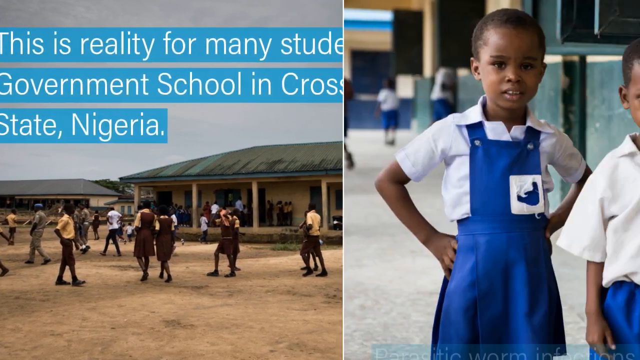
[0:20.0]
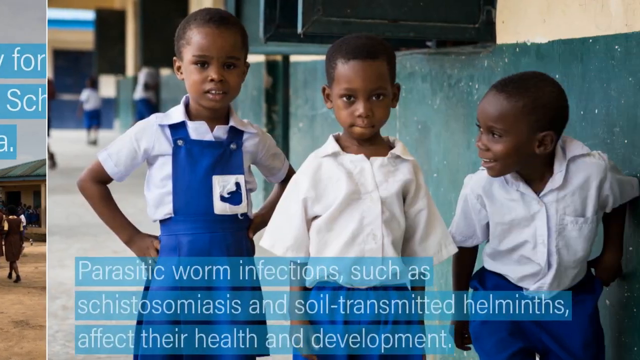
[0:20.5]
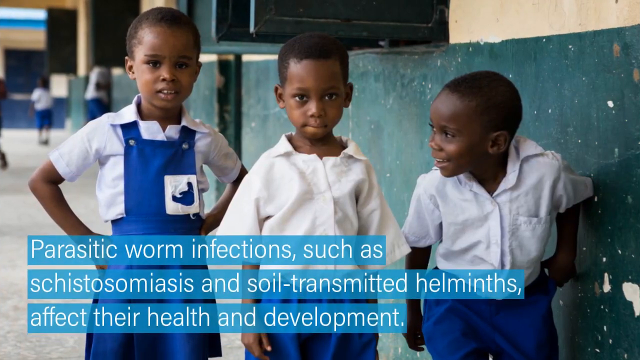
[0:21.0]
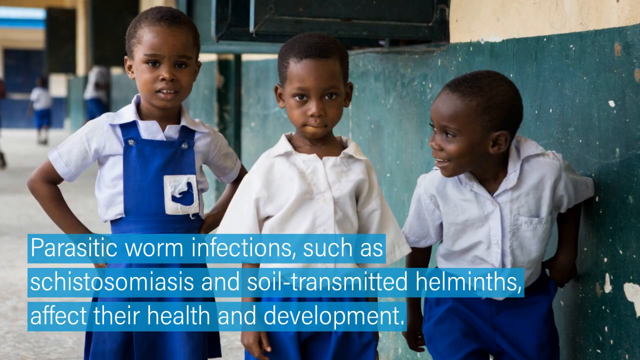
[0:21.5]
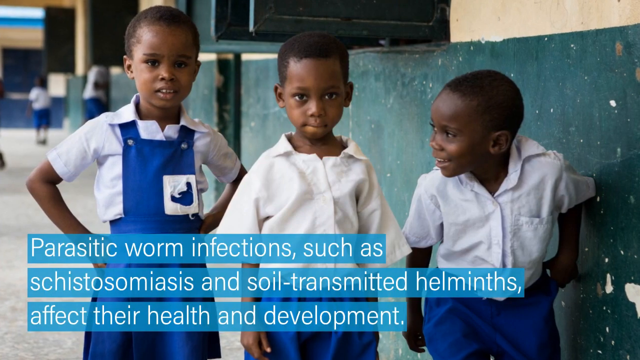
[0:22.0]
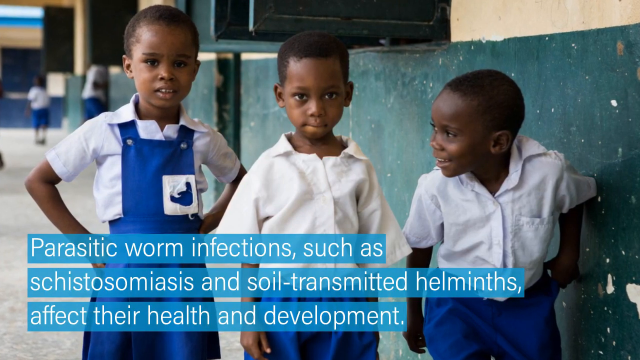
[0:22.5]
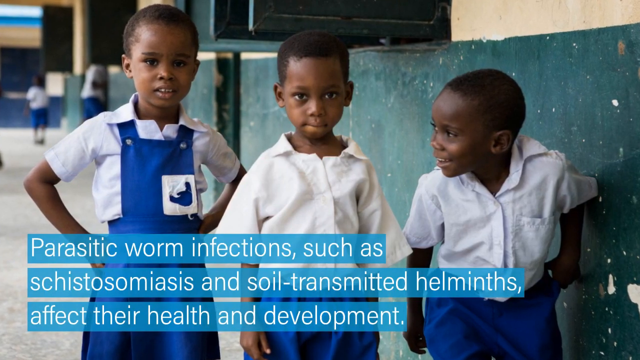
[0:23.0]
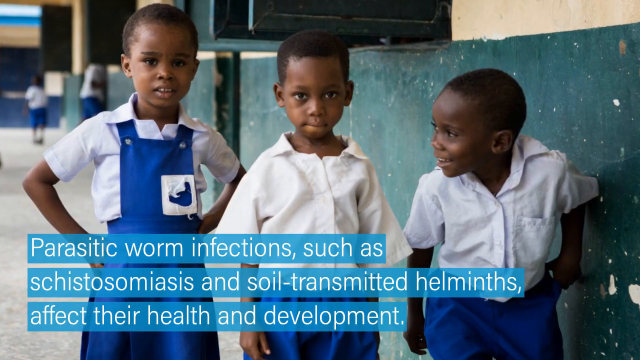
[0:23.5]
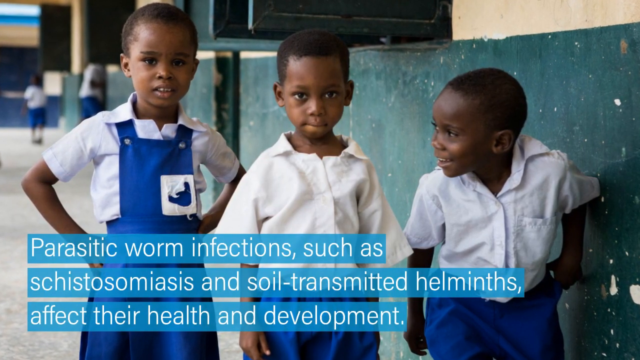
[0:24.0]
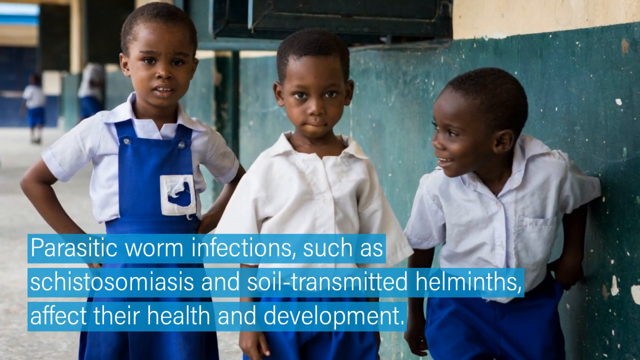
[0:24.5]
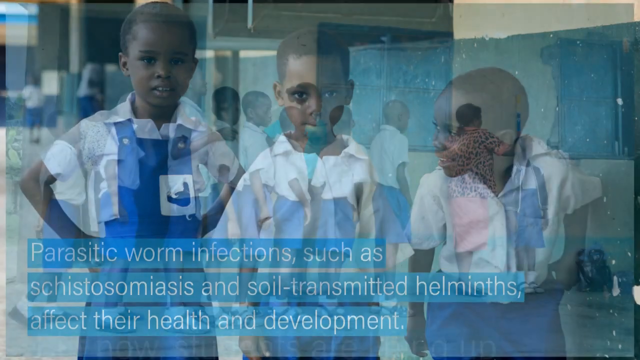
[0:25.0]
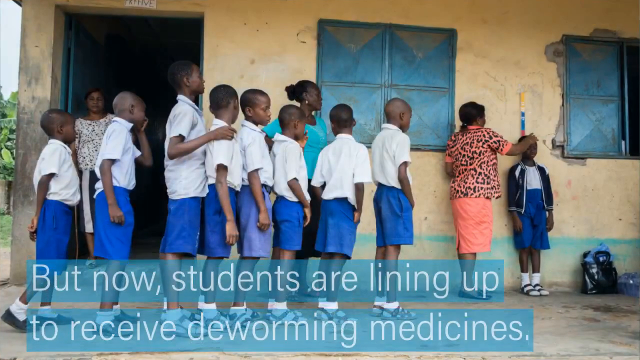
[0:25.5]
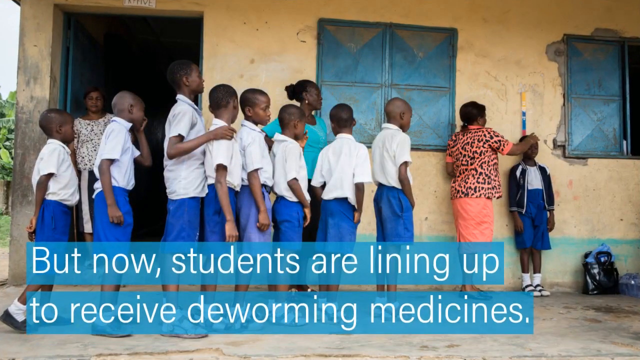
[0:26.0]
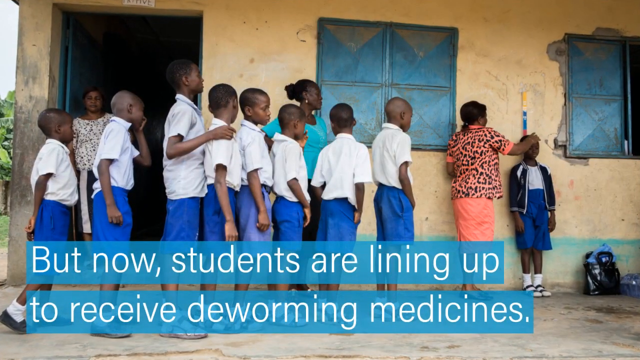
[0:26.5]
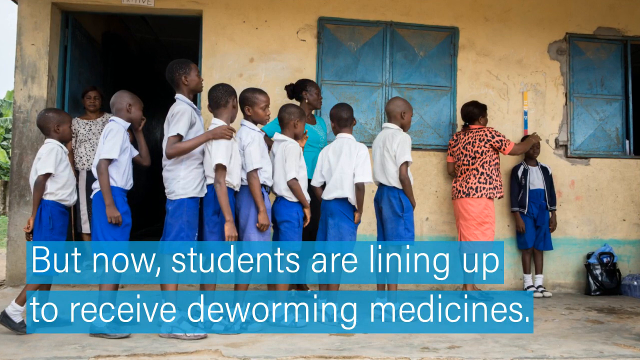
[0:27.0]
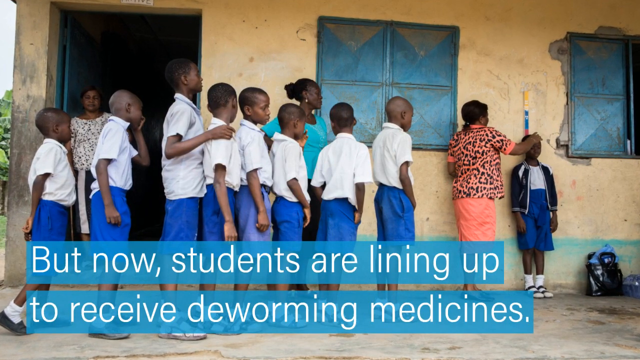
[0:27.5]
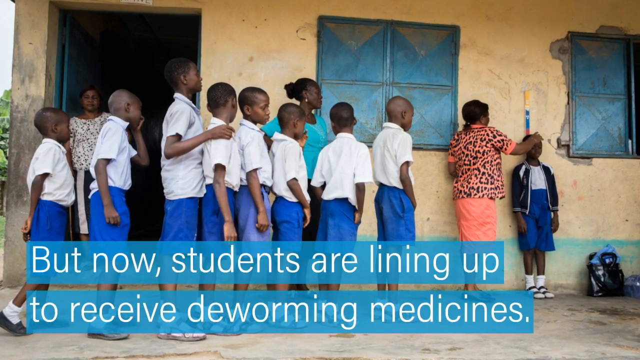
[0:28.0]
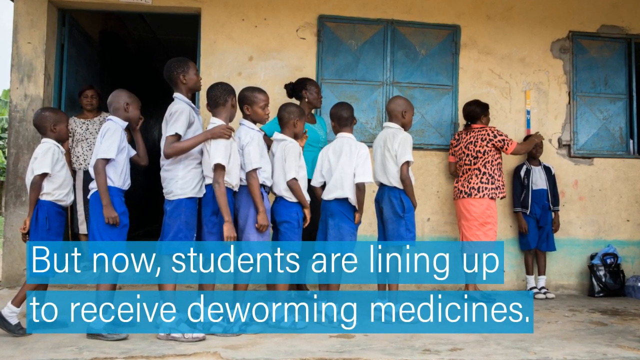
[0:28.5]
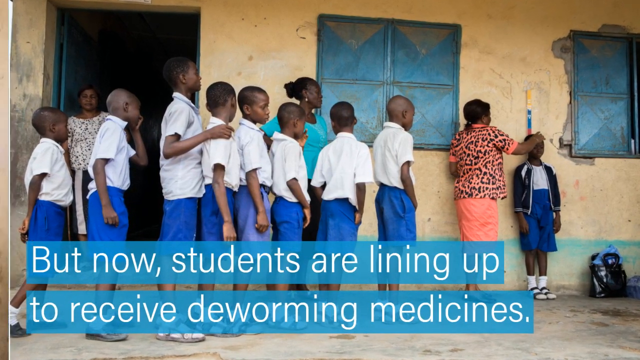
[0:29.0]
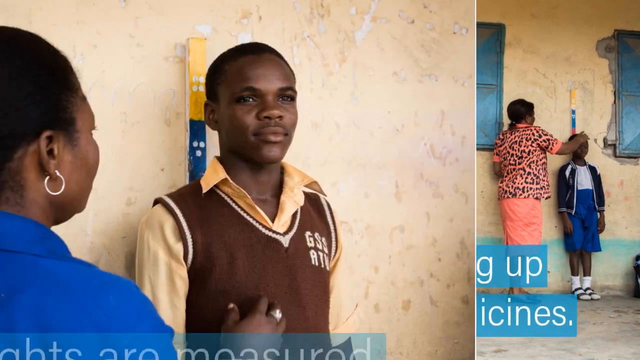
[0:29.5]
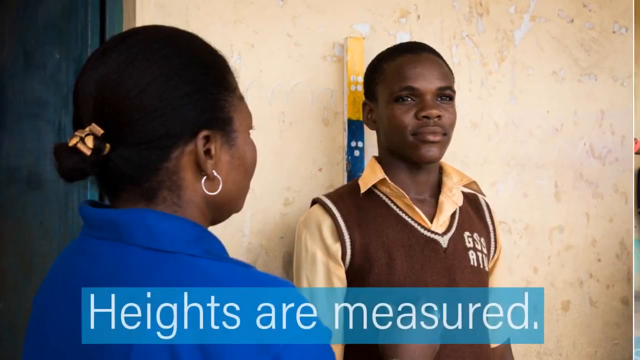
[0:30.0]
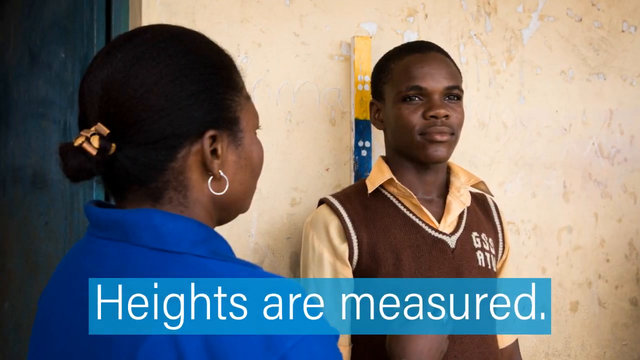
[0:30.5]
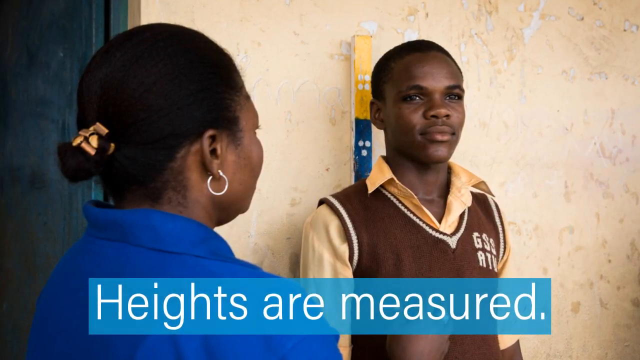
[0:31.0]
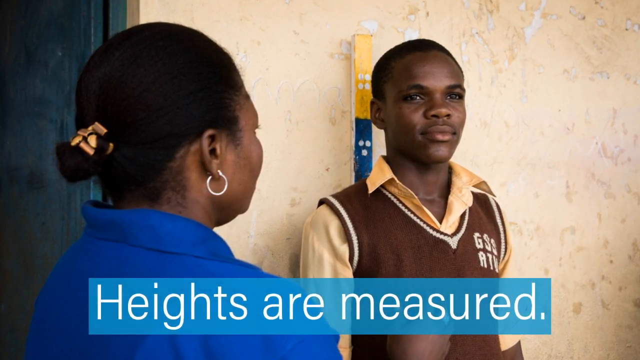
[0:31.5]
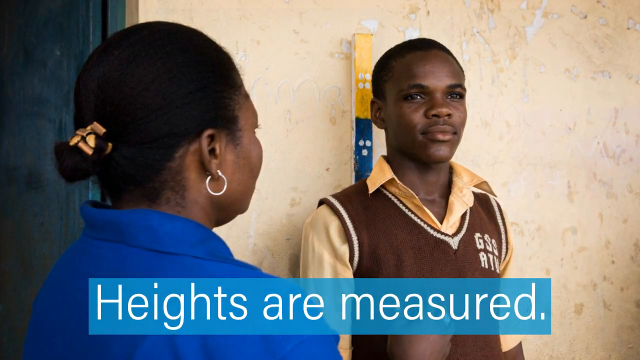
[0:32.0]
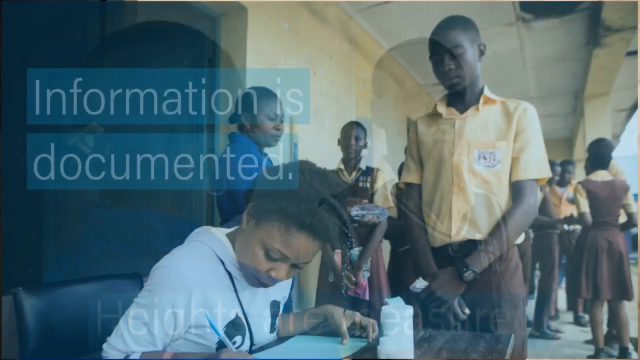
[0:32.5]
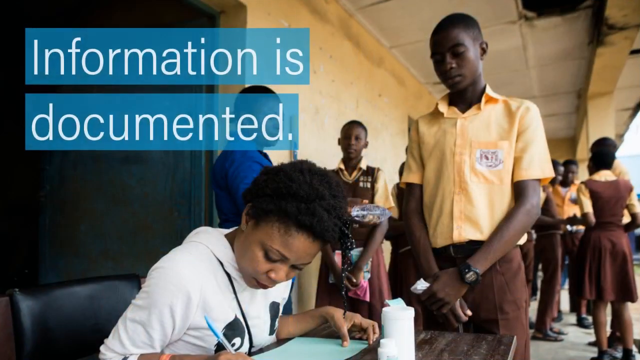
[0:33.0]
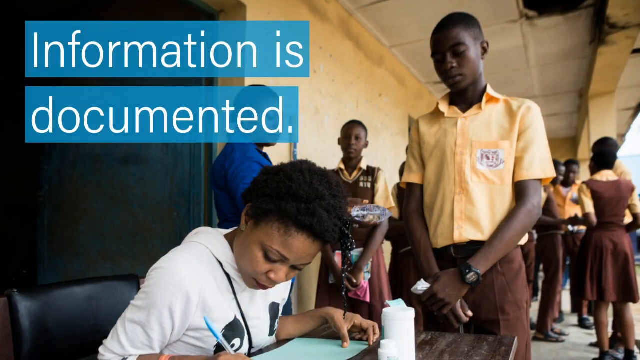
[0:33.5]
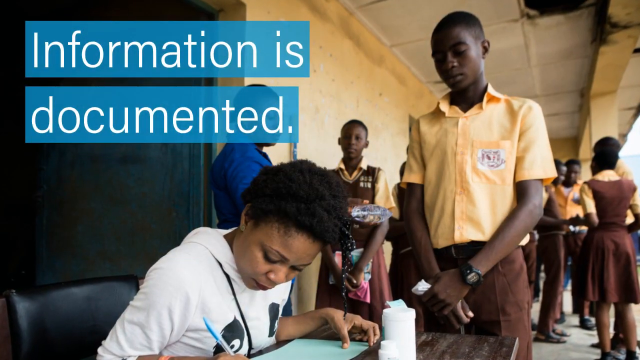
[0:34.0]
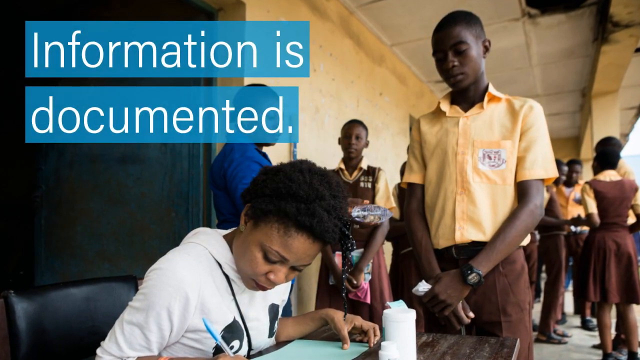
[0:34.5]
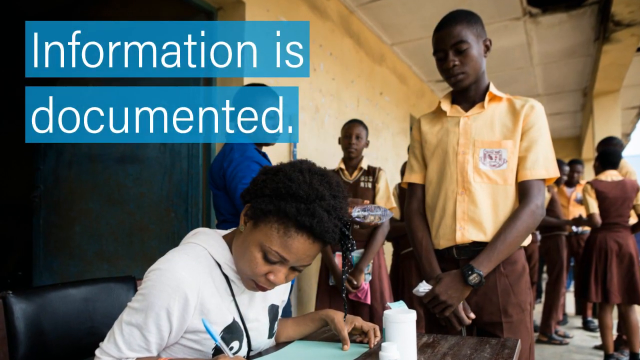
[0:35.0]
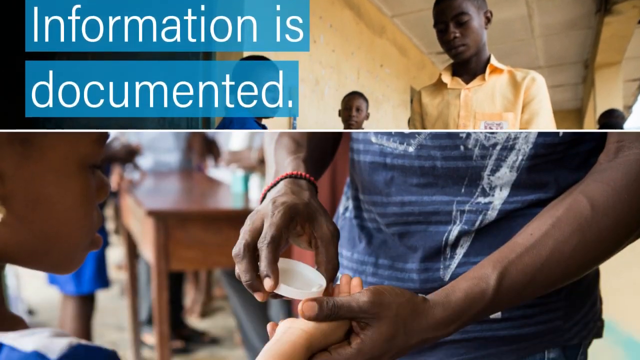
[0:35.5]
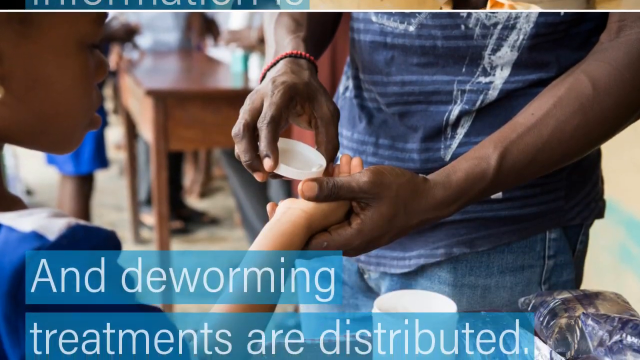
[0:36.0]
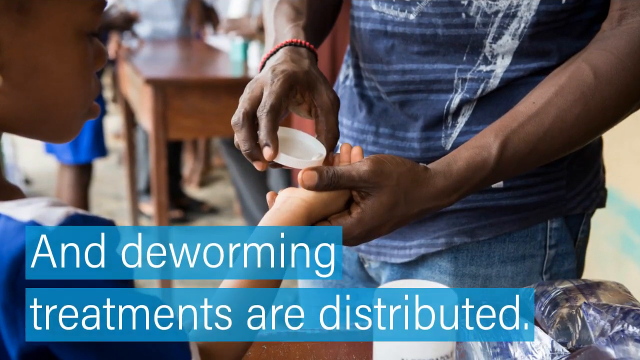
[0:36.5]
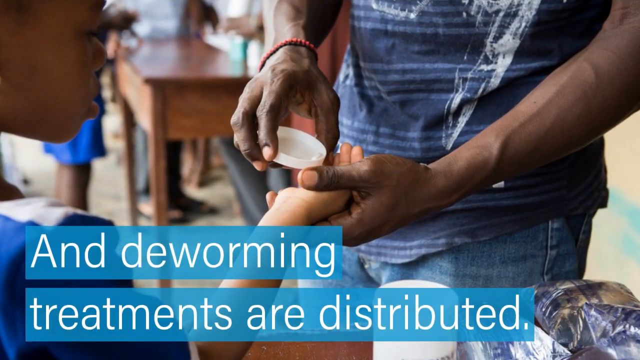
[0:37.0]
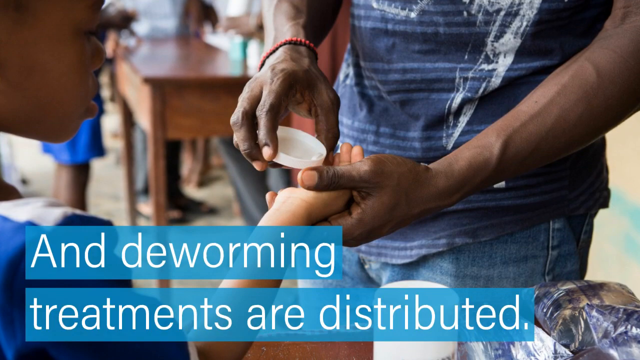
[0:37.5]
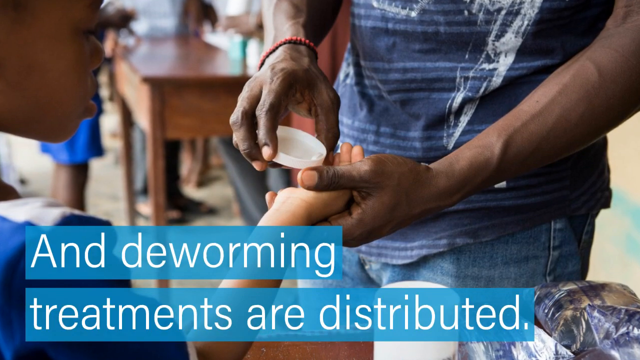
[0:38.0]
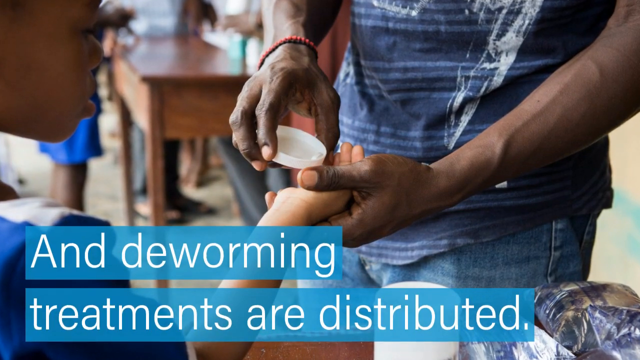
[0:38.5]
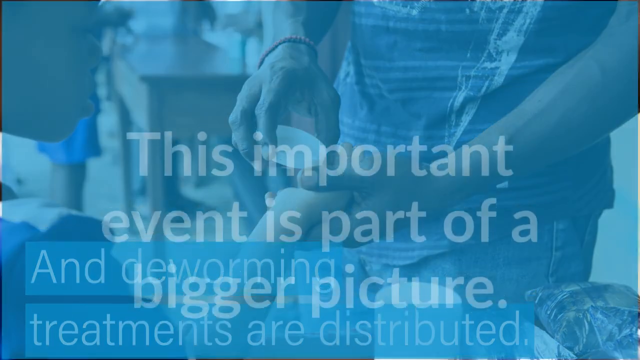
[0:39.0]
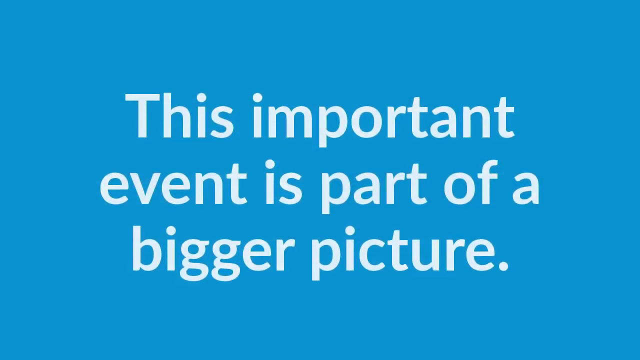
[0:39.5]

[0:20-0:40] The image disappears off the left of the screen as a new one arrives from the right: a still photo of three children, maybe five or six years old, inside a school. The two on the left, a girl and a boy, look toward the camera; the girl has her arms akimbo. The third, a little boy, leans forward with his head turned toward the other kids and a smile on his face. Text at the bottom of the screen refers to parasitic worm infections. The image fades to another photo, apparently outside a schoolhouse with kind of a yellow facade and a big open door on the left. A column of children stands left to right across the image; eight are visible, all apparently boys, in white shirts and medium blue shorts, seen from the right shoulder and of varying heights. One kid at the front stands with his back to the wall, and what appears to be a nurse, to the left, has her hand around his forehead, maybe taking his temperature. The text below refers to receiving deworming medicine; the children are in line for it. The next photo is a close-up of a kid leaning against the wall, seen from the stomach up; he looks older, like a teenager. Some kind of ruler for measuring height is behind him against the wall, and the text at the bottom says heights are measured. The next screen says "information is documented" and shows a bunch of kids lining up, all in yellow shirts; the girls wear chocolate brown vests and skirts and the boys chocolate brown pants. A new screen then arises from the bottom. All of these are still photos, with some motion in how one screen replaces another. This one has text about deworming treatments being distributed and shows a close-up of a right hand putting some kind of pills into a child's left hand.